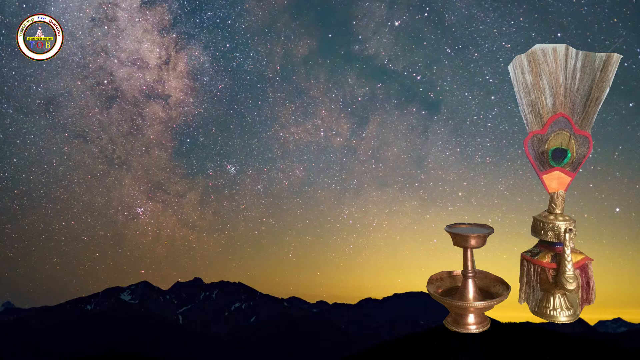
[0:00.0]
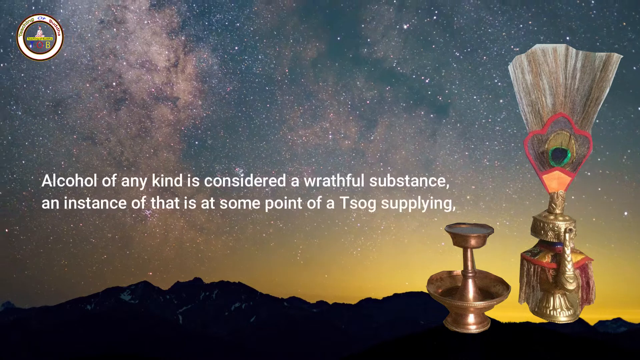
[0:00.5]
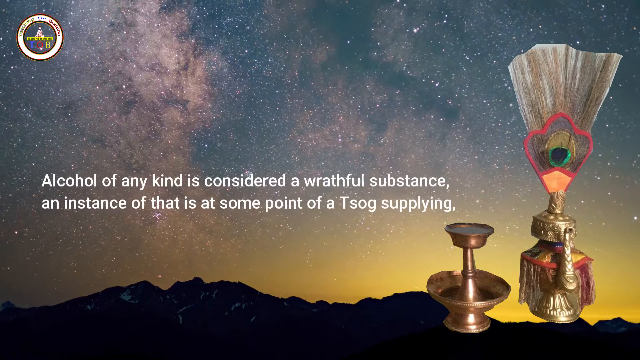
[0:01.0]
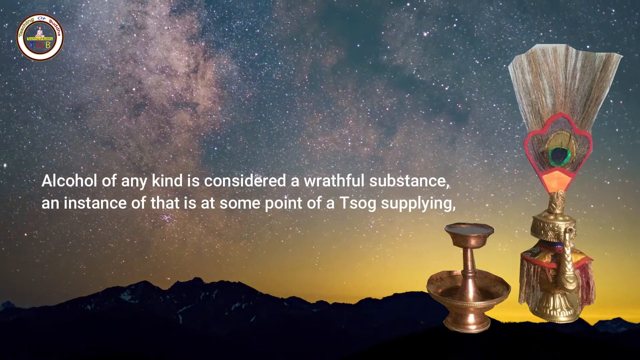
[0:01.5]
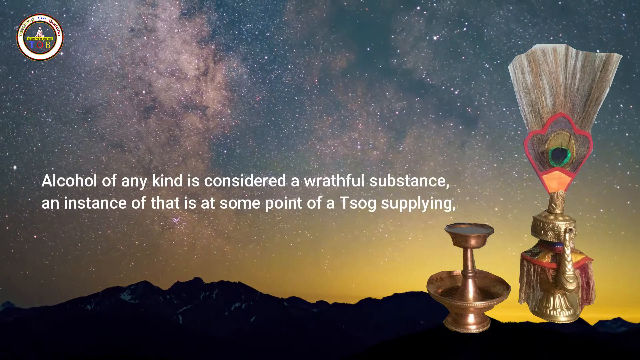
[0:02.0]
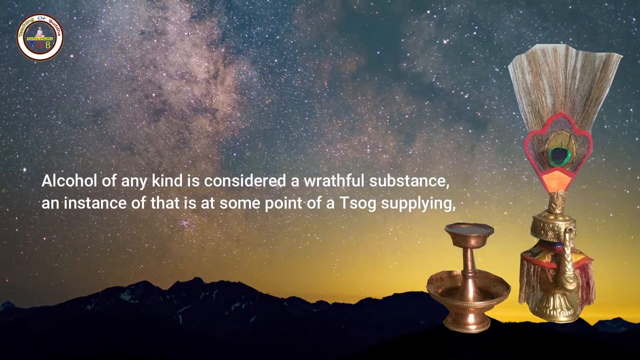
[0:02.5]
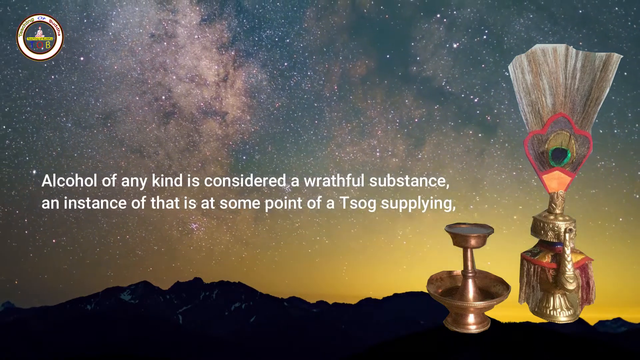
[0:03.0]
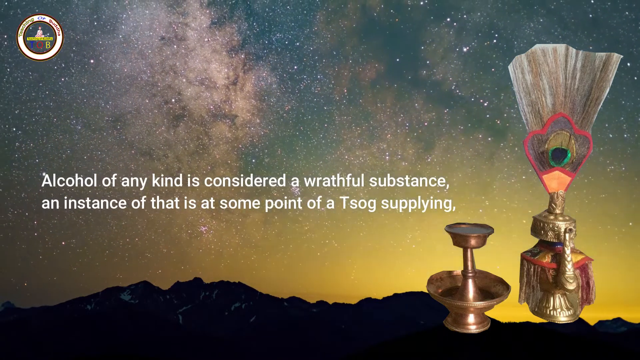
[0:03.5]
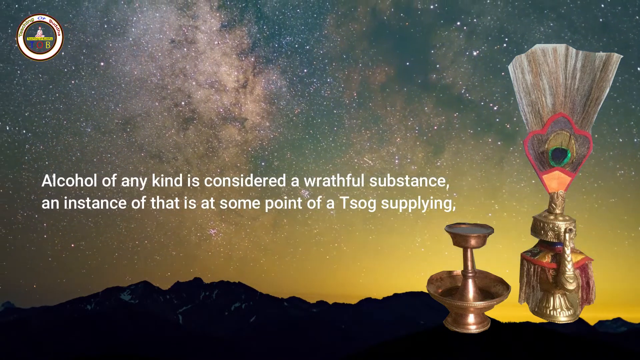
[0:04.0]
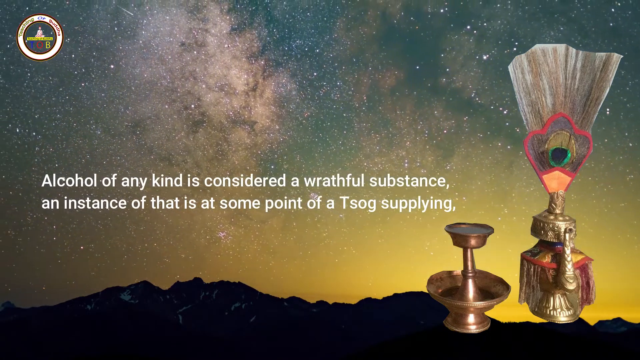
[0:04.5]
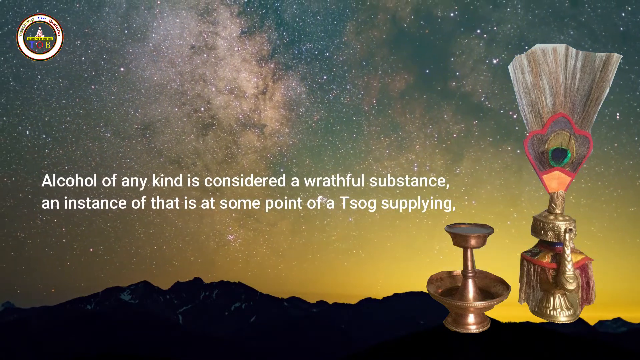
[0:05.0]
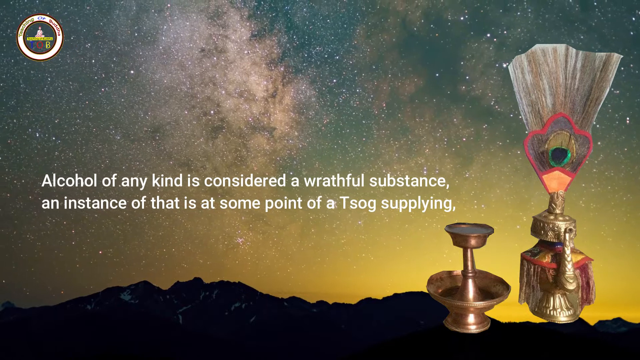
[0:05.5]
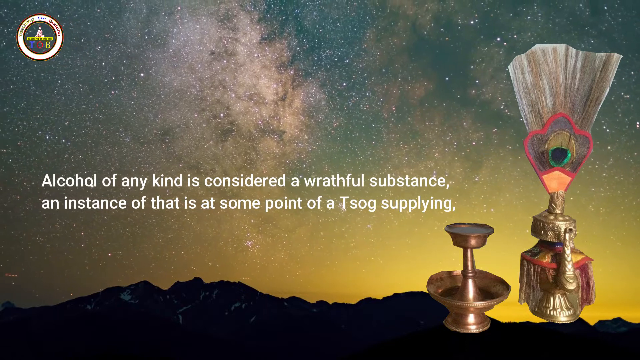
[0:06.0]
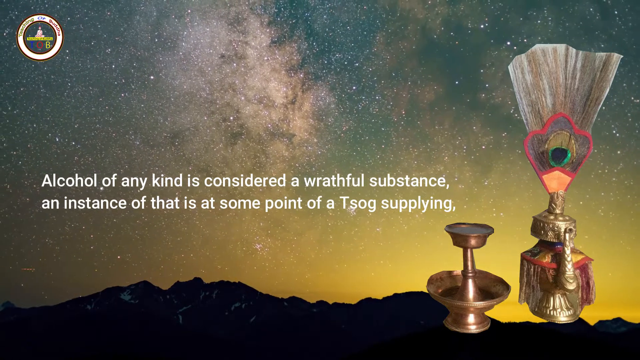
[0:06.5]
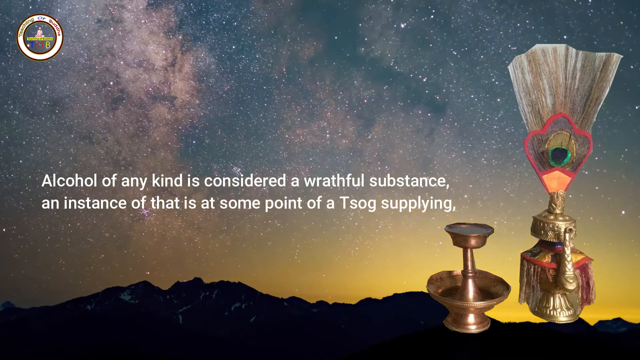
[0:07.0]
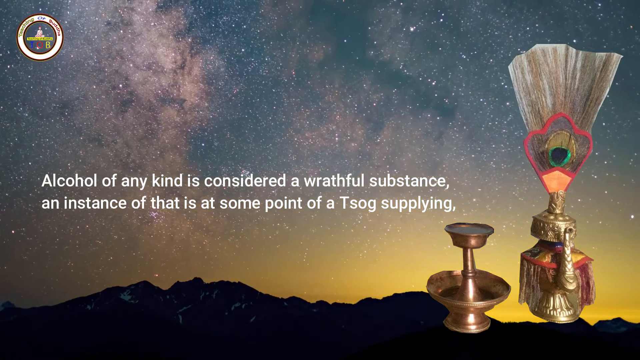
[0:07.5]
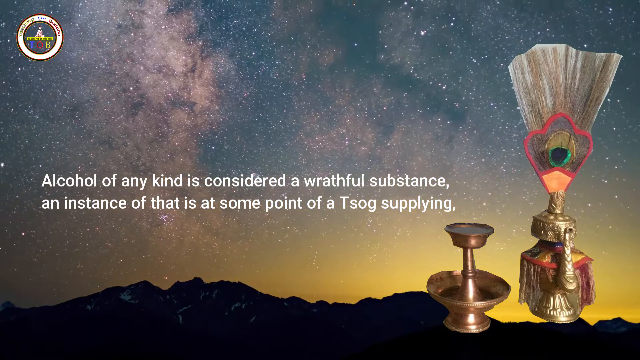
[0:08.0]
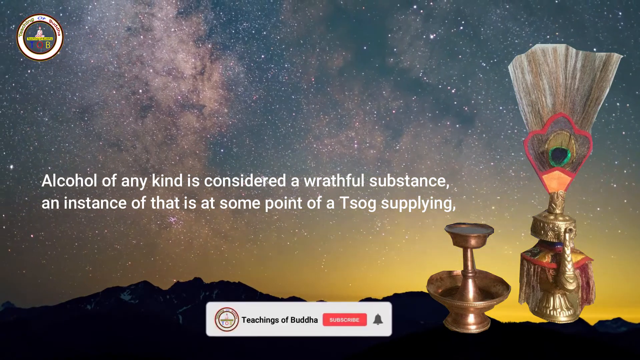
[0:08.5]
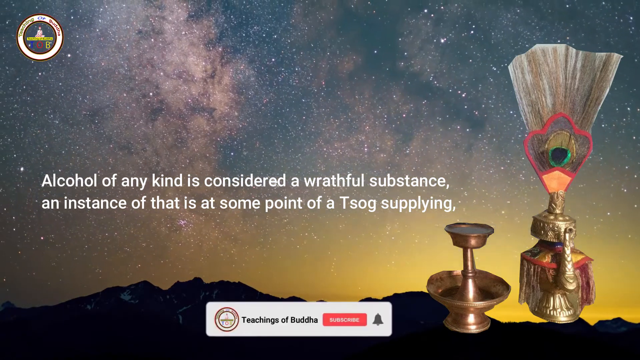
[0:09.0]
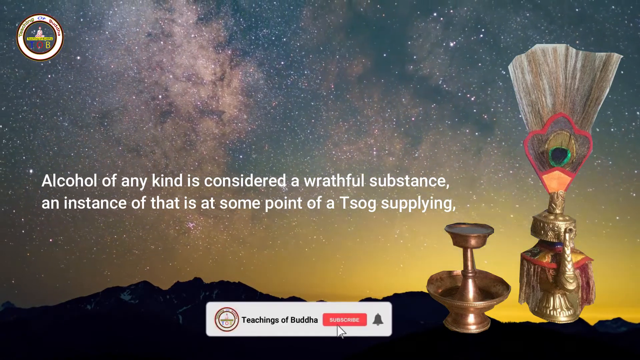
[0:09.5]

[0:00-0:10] A nighttime sky moves above a mountain range on the horizon. The sky is full of light because the stars are shining brightly; it is the Milky Way. A stamp from some kind of Buddha or Buddhist organization is in the top left corner, and two religious artifacts are on the bottom right side; they look like vases or something used for religious ritual. White text appears just above the mountain range, reading "alcohol of any kind is considered a wrathful substance." As the text remains on screen the sky keeps moving, and partway through the sky around the horizon takes on a yellow hue or glow.